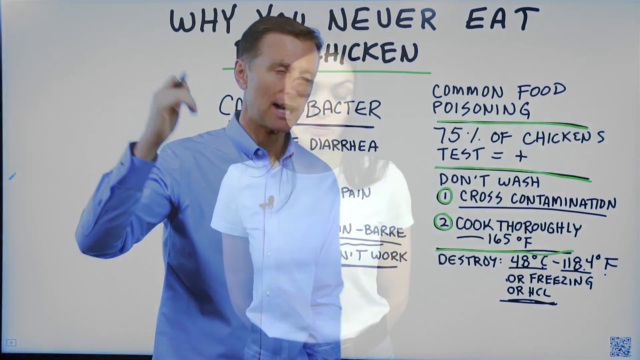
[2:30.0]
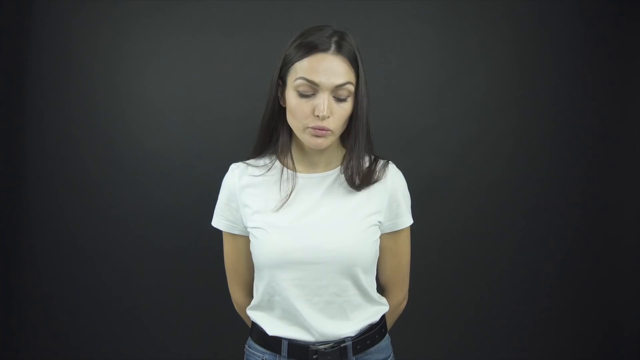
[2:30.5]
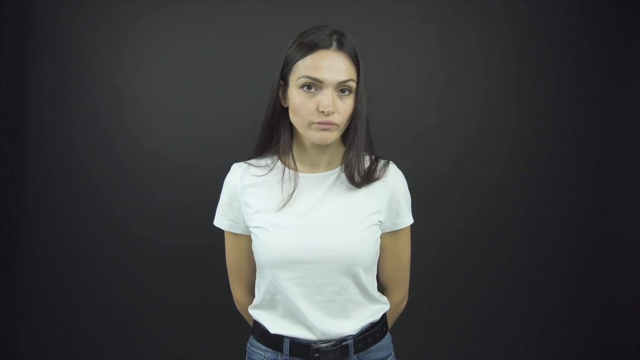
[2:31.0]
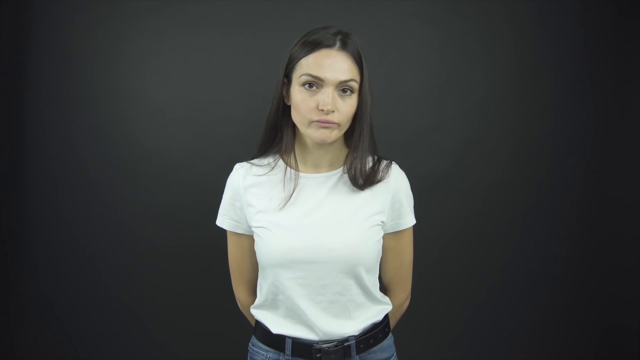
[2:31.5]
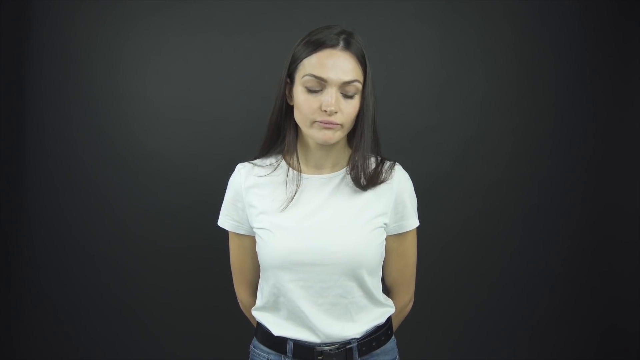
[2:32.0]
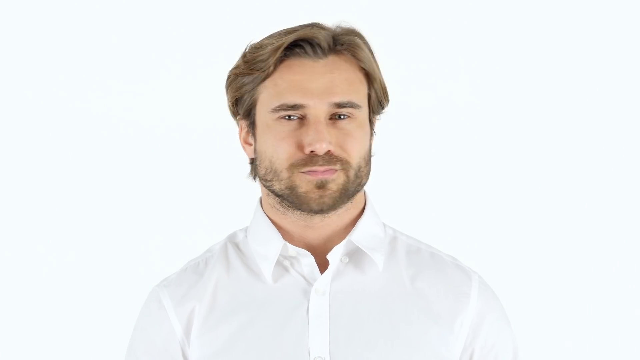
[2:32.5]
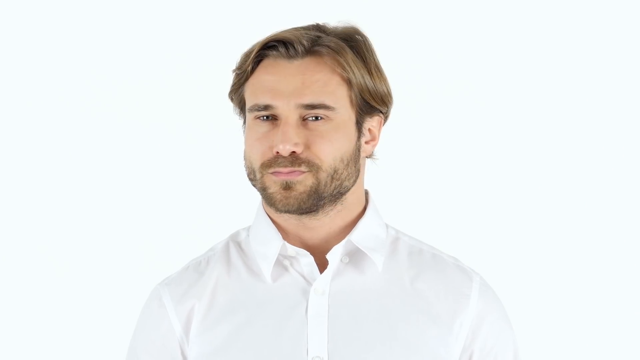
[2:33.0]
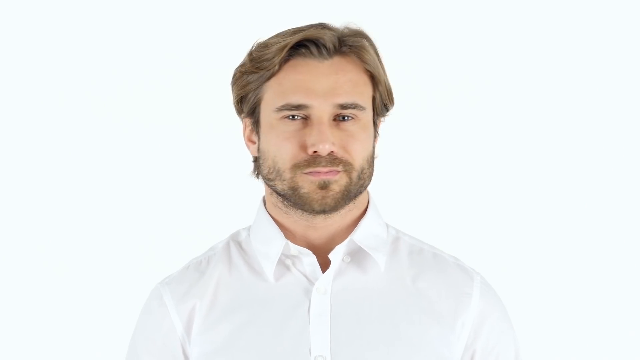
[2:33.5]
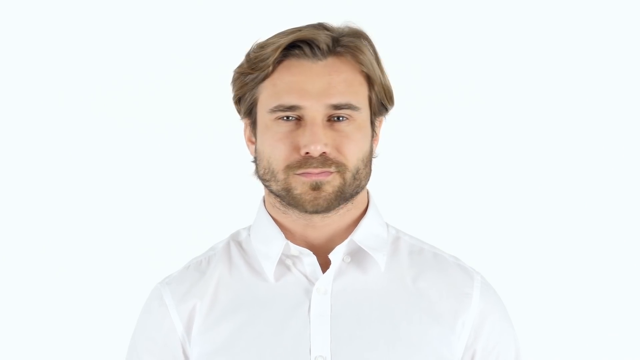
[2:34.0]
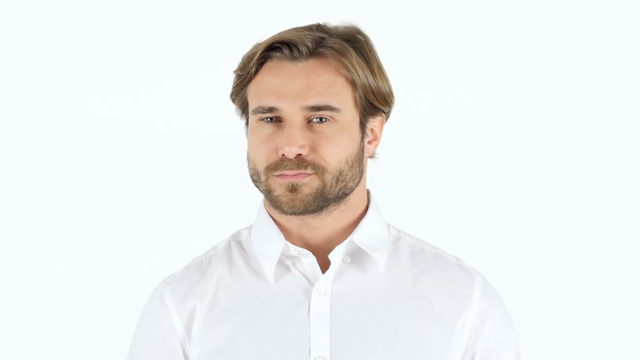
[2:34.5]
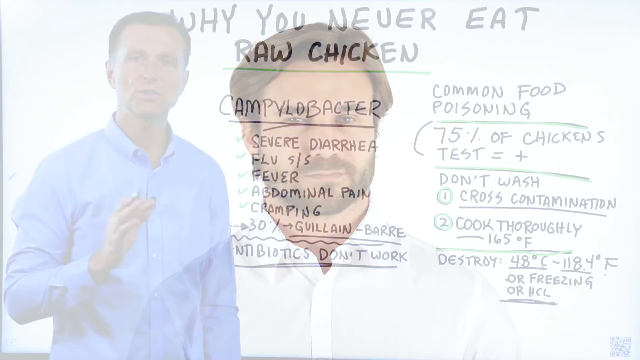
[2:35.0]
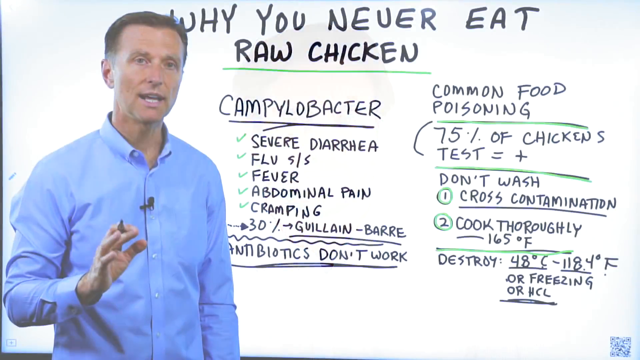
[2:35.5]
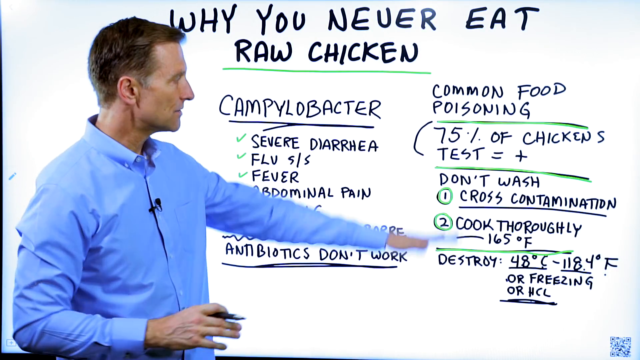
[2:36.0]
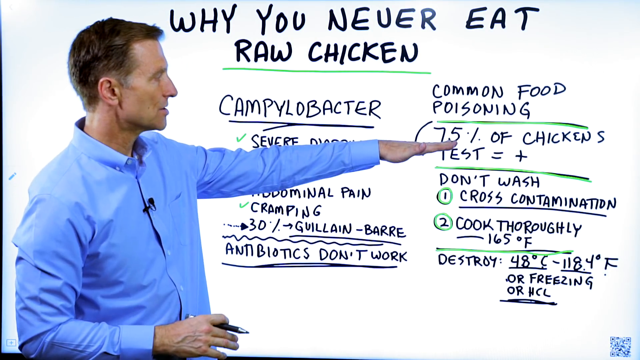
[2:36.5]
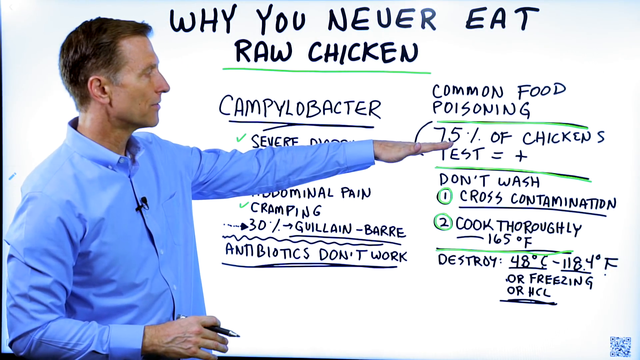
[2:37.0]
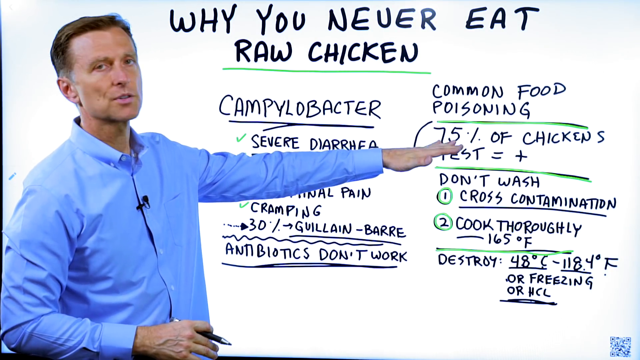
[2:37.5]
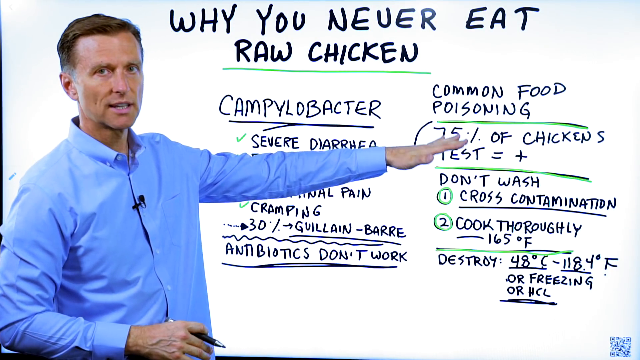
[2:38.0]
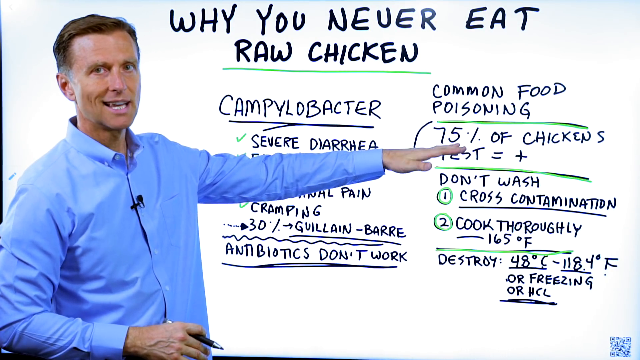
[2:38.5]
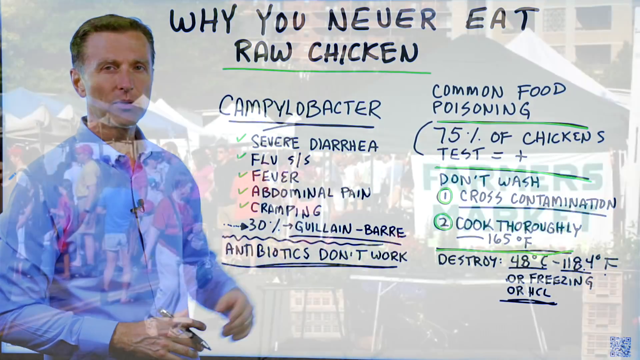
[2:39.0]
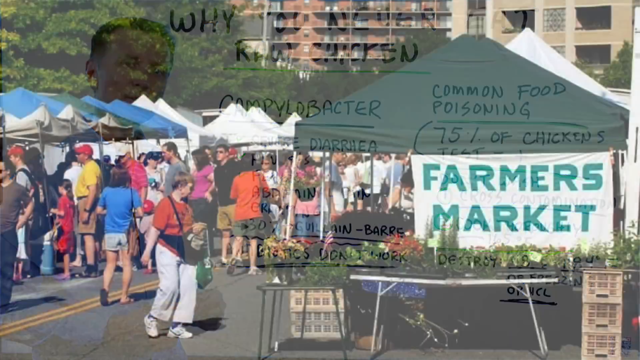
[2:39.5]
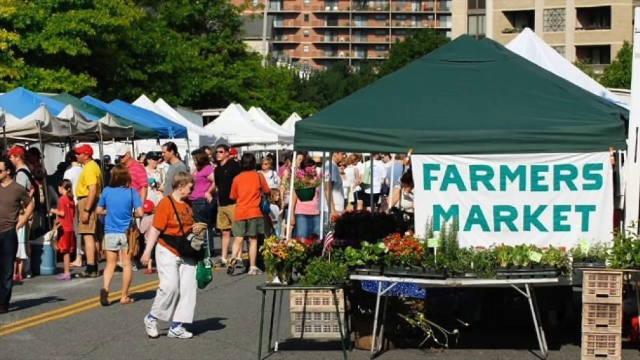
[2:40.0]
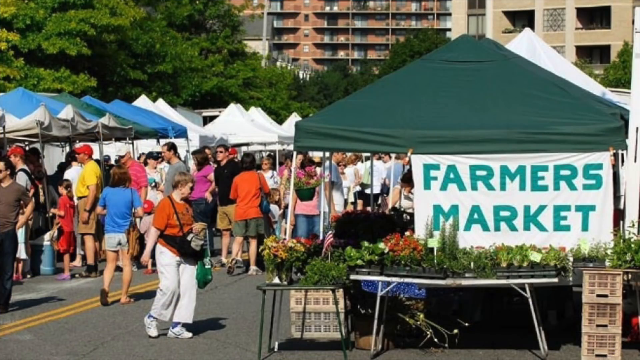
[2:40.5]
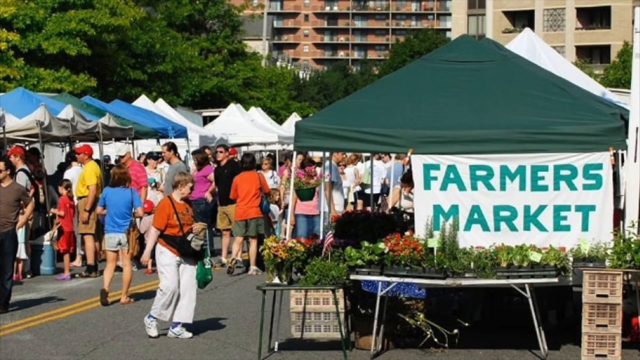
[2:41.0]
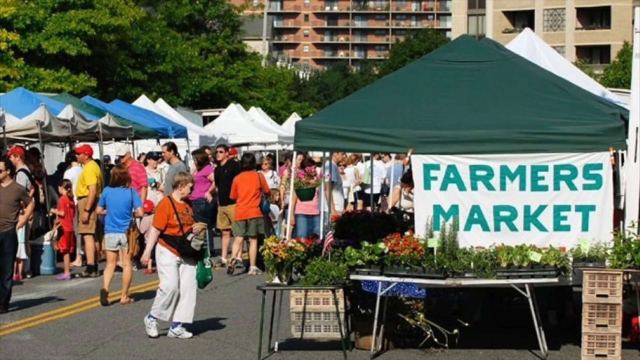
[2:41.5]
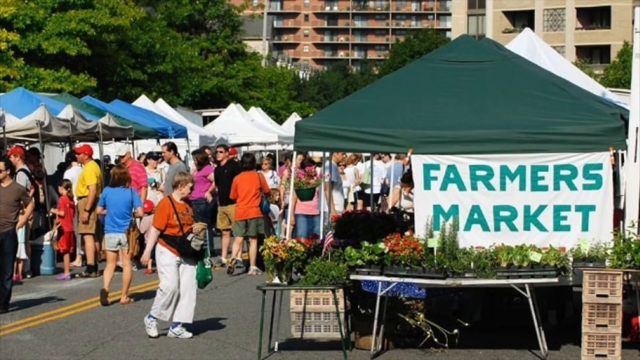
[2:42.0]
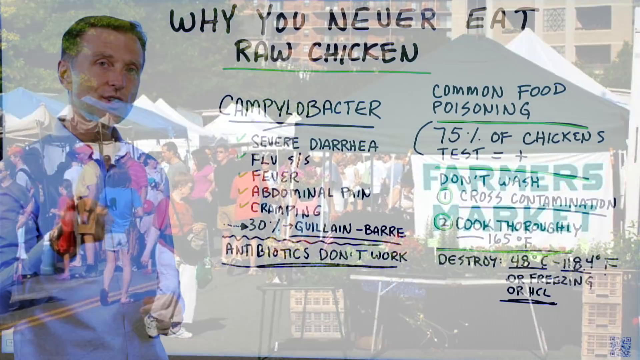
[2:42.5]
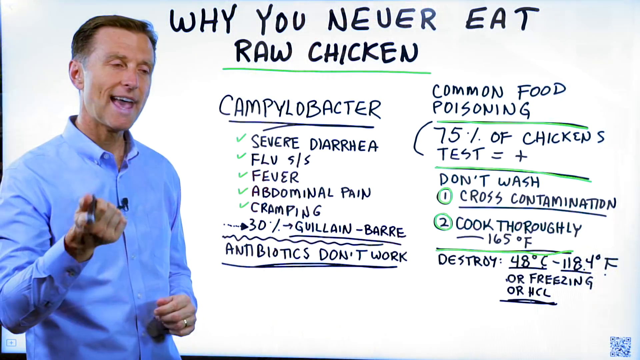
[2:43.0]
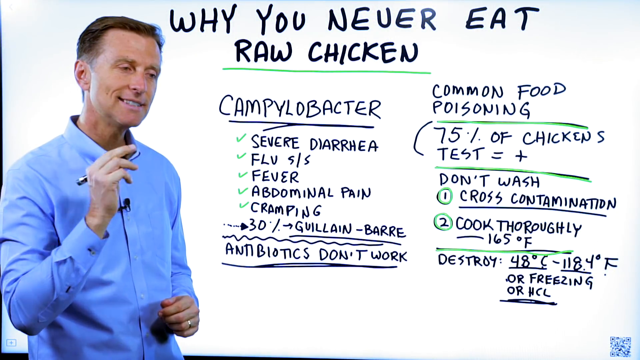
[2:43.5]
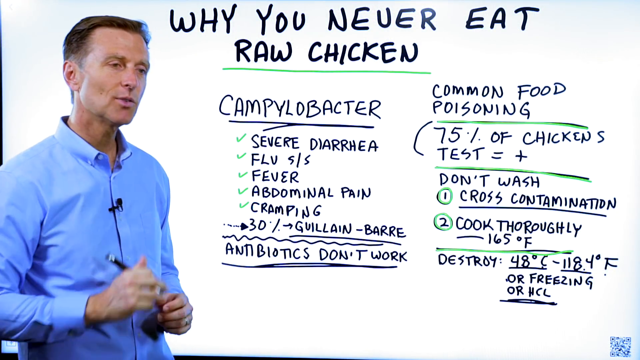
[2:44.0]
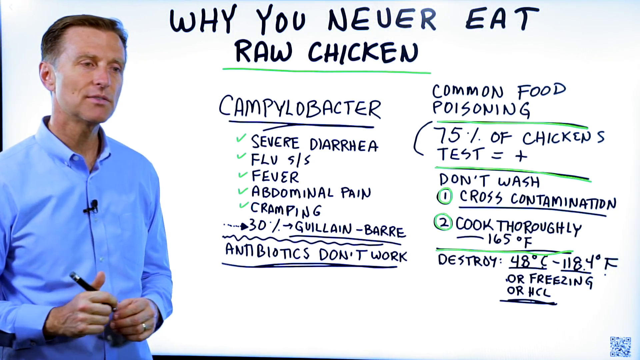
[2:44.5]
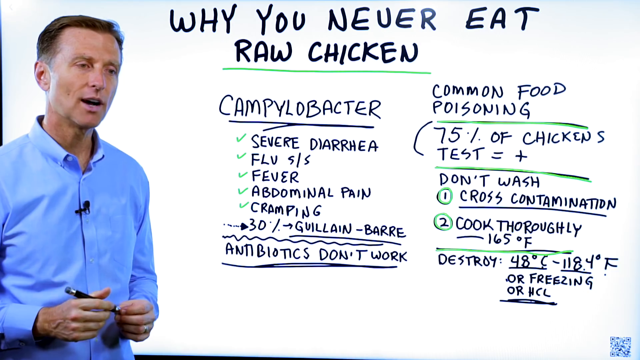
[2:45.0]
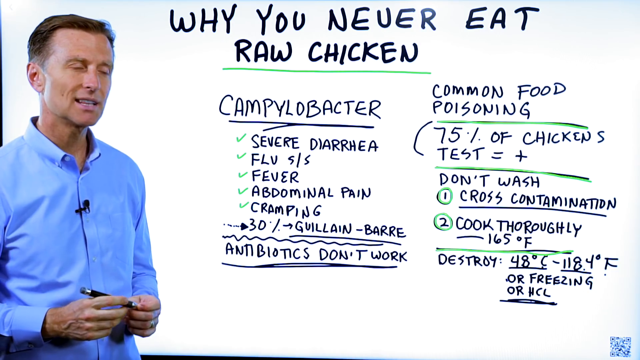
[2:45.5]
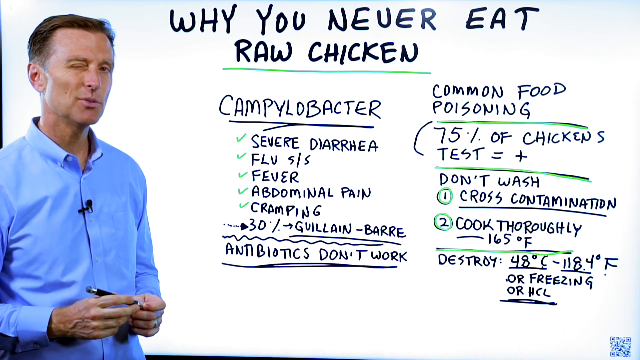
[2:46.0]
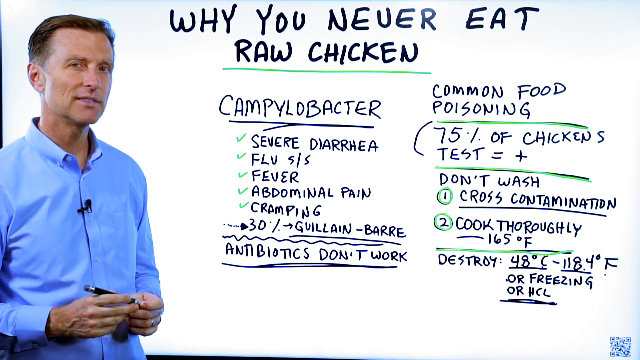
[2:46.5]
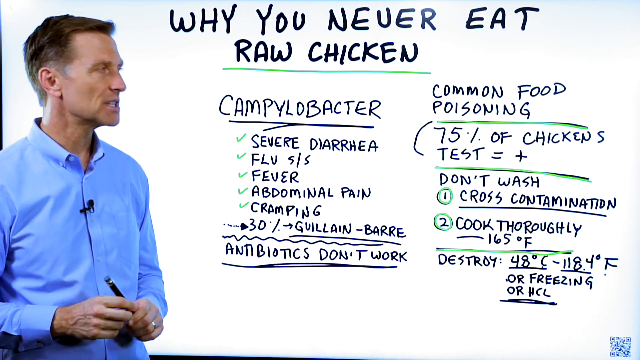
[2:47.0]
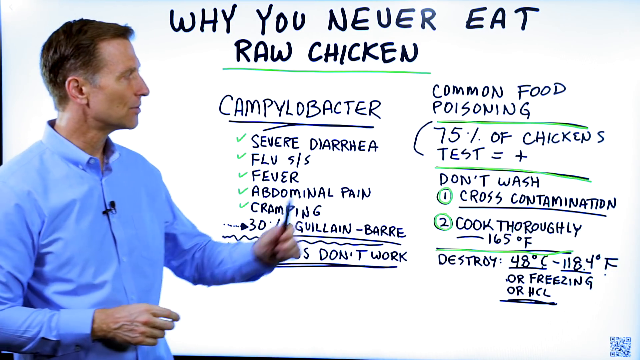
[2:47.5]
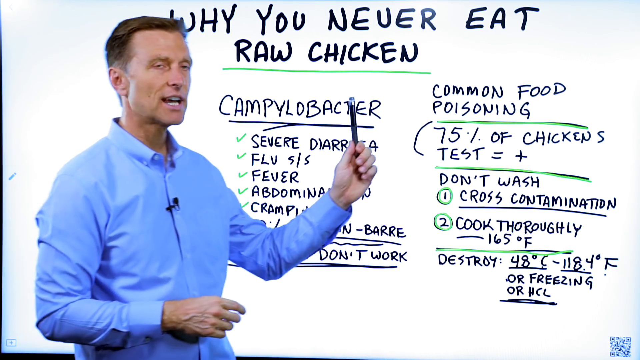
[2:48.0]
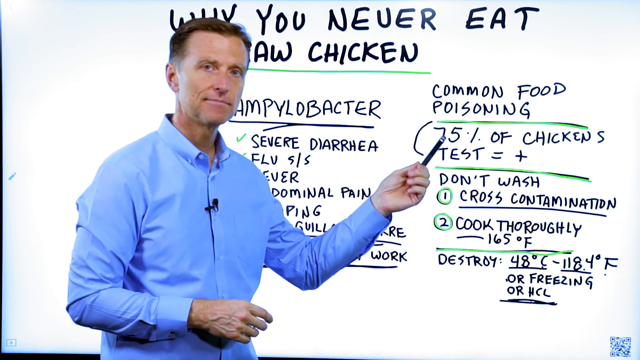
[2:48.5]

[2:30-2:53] The teacher is shown again. A picture shows a woman with long brown hair, wearing a white T-shirt and jeans, nodding her head. Then a video shows a man with short blonde hair, wearing a white T-shirt, also nodding his head; he looks 30-something years old. The teacher is shown again. Next, a picture shows people at a place with the words "Thomas Market" written on it. The teacher is shown once more, still teaching, and finally a blank picture appears.